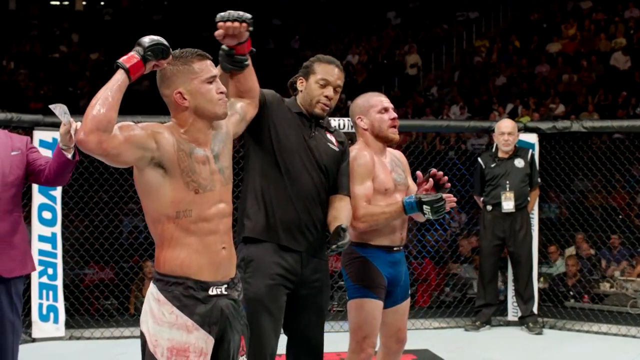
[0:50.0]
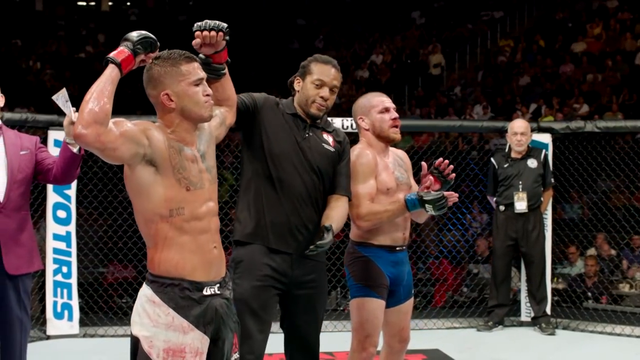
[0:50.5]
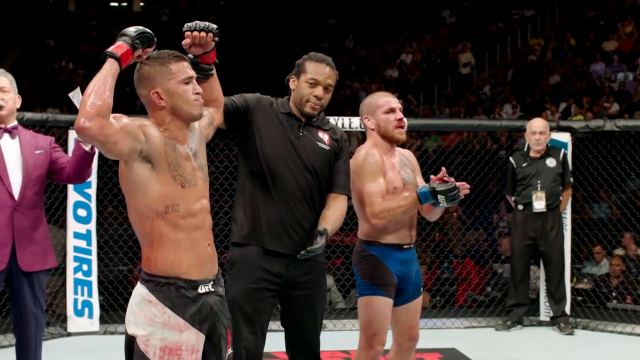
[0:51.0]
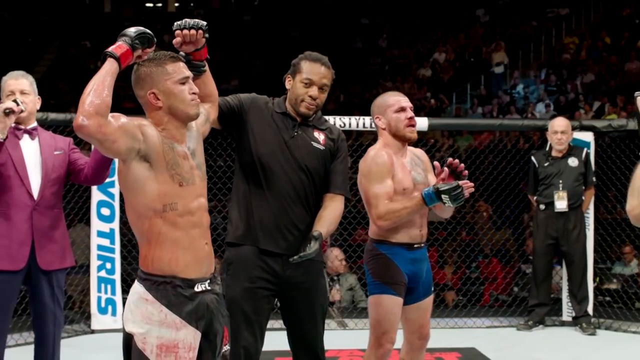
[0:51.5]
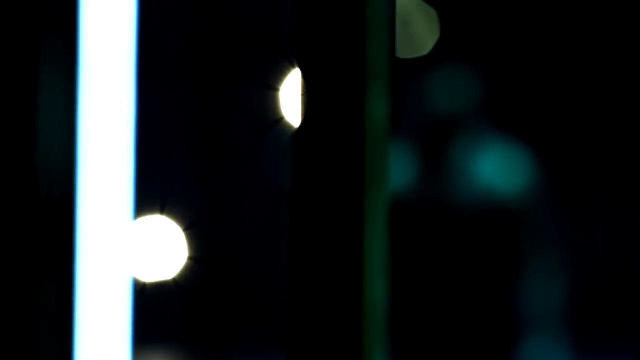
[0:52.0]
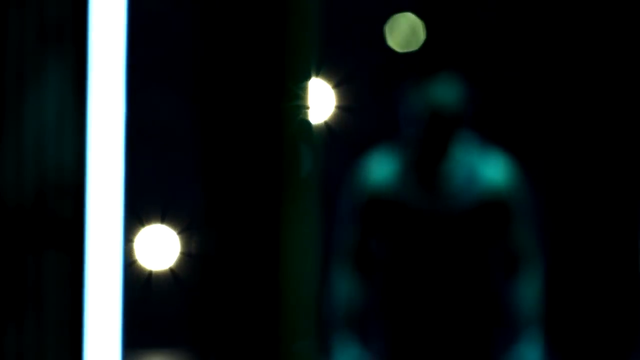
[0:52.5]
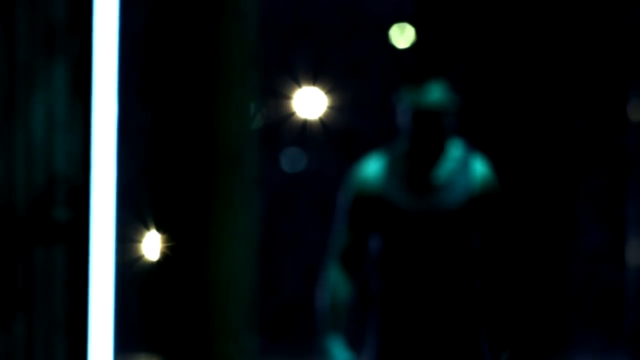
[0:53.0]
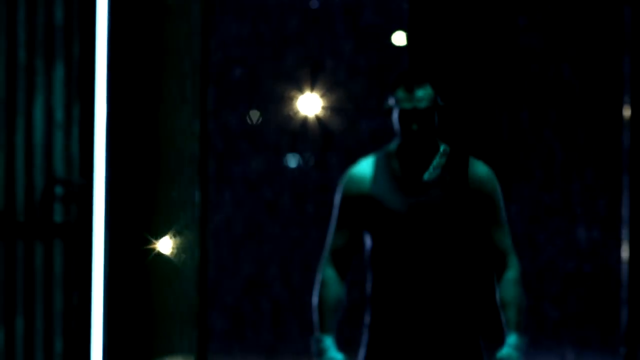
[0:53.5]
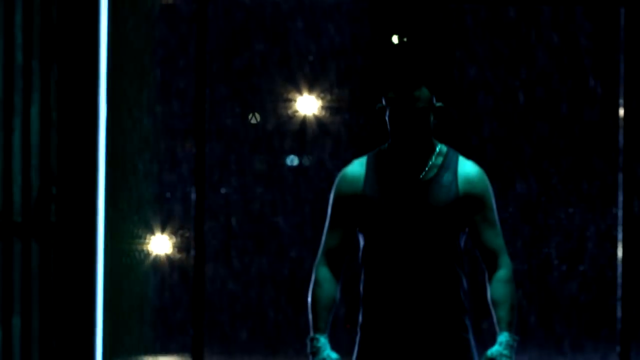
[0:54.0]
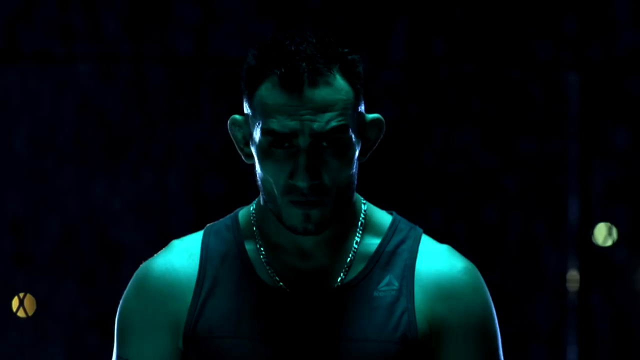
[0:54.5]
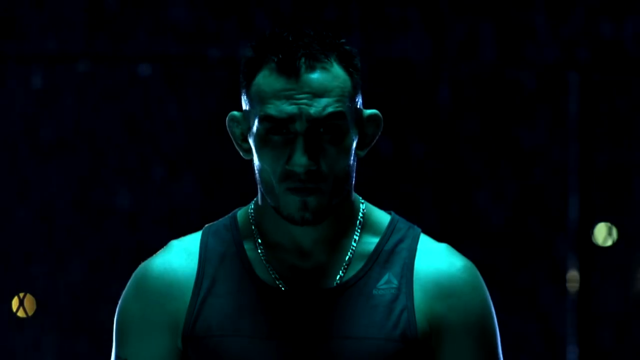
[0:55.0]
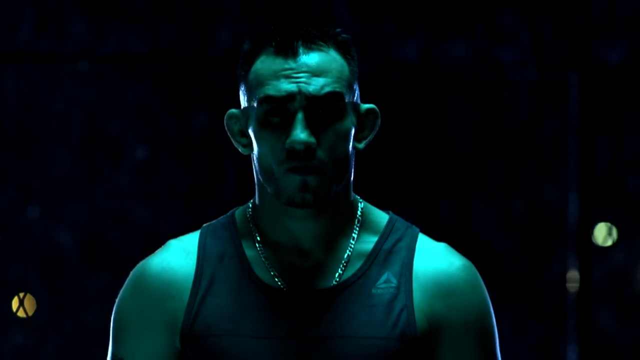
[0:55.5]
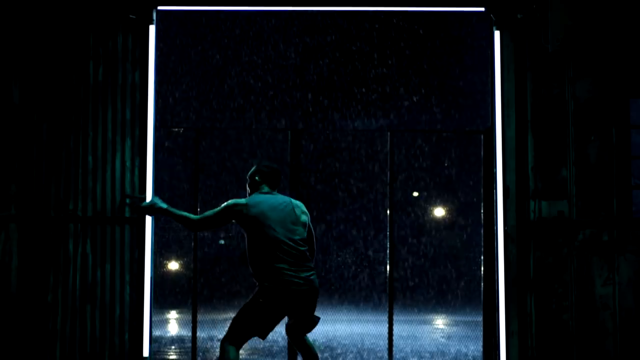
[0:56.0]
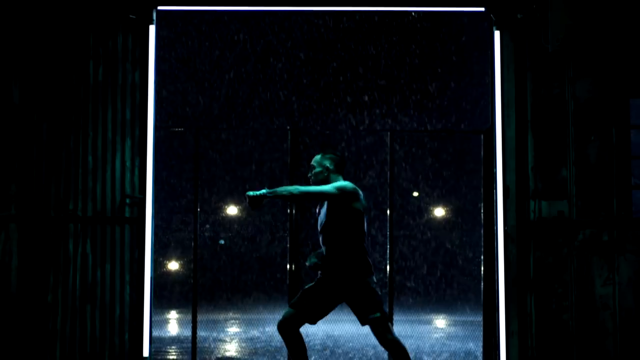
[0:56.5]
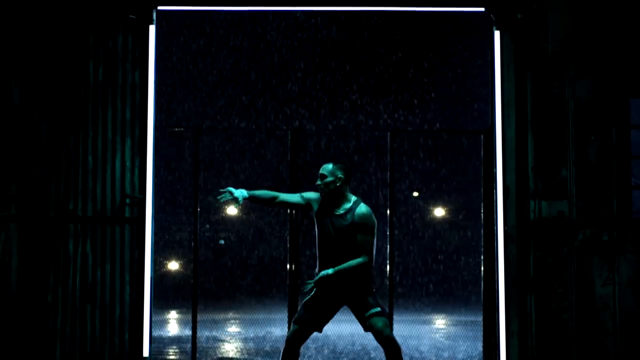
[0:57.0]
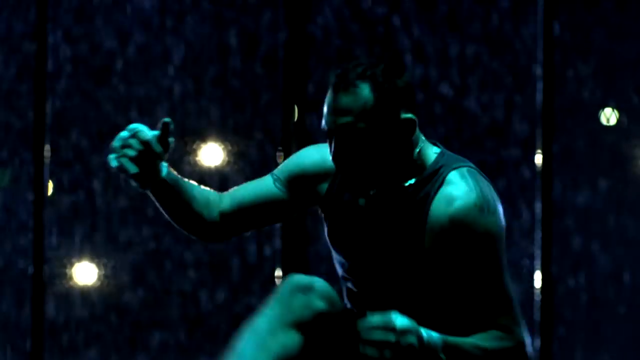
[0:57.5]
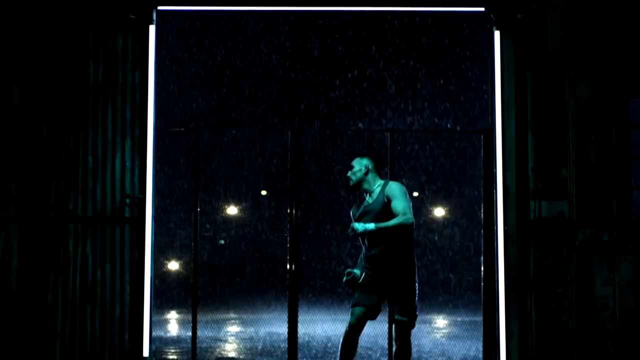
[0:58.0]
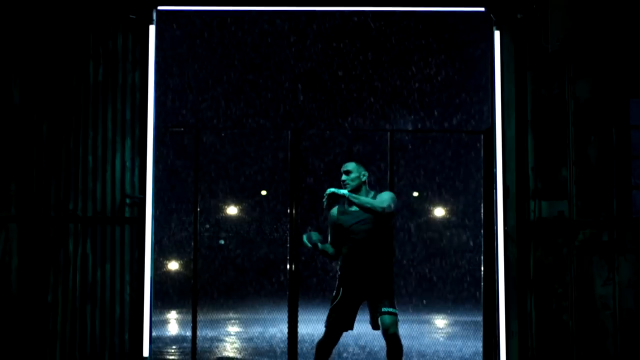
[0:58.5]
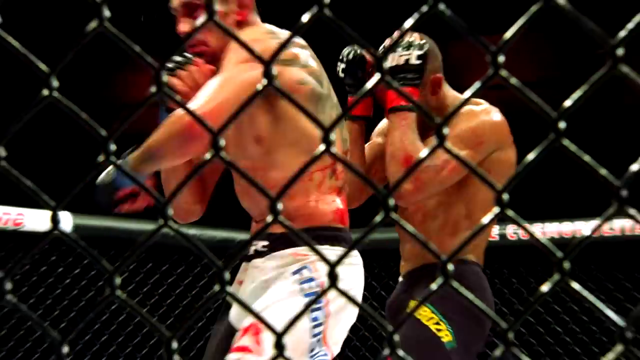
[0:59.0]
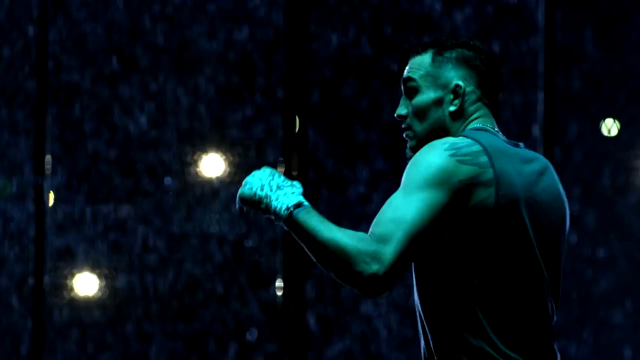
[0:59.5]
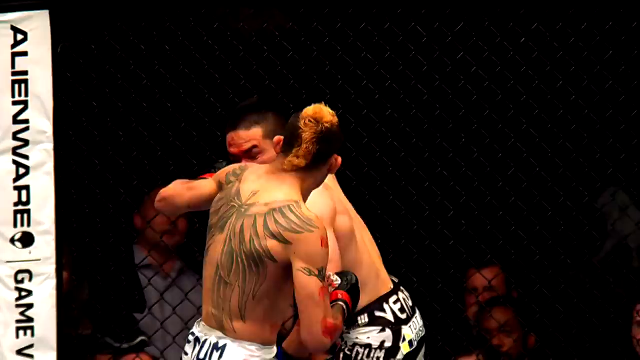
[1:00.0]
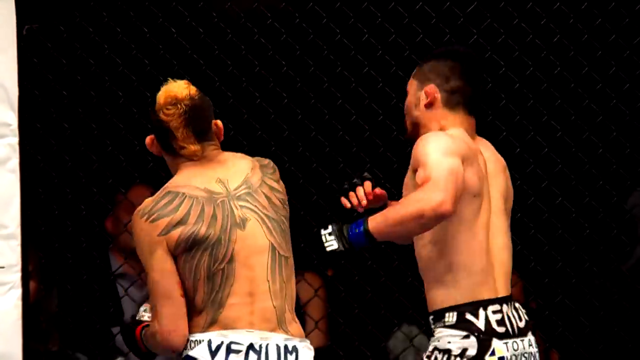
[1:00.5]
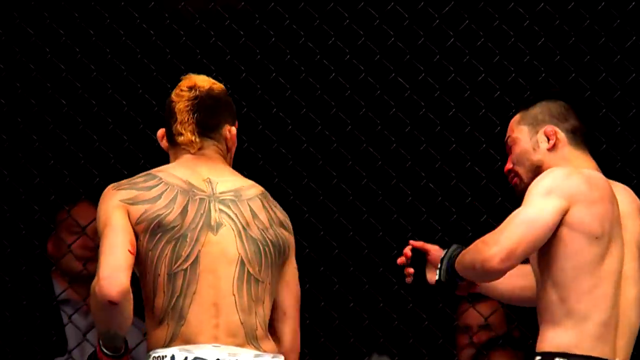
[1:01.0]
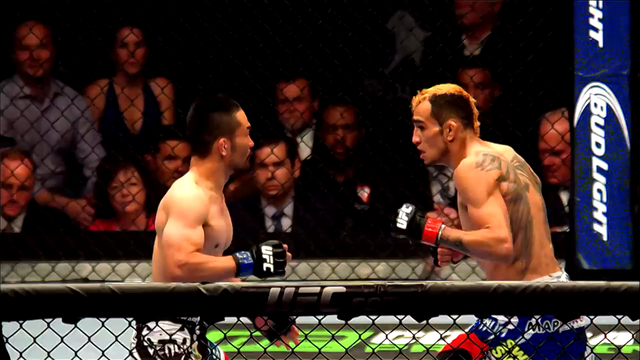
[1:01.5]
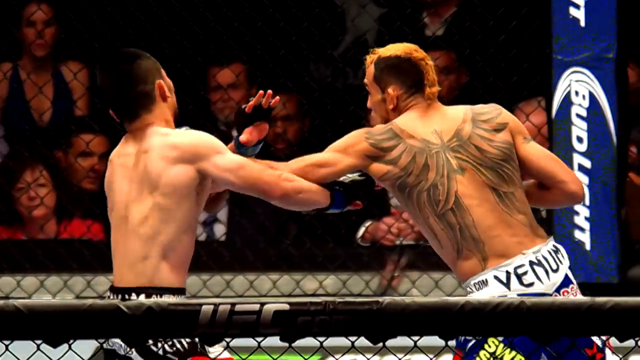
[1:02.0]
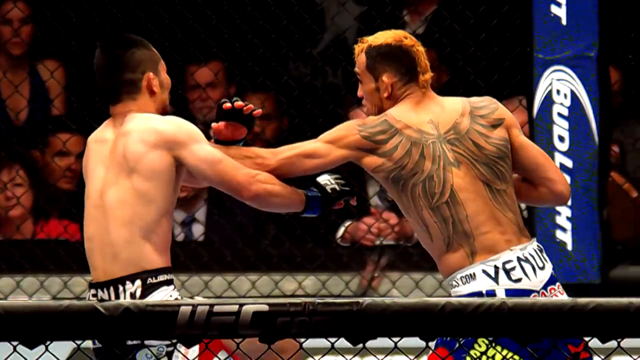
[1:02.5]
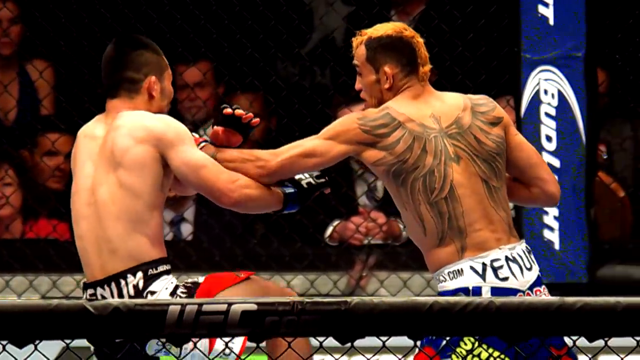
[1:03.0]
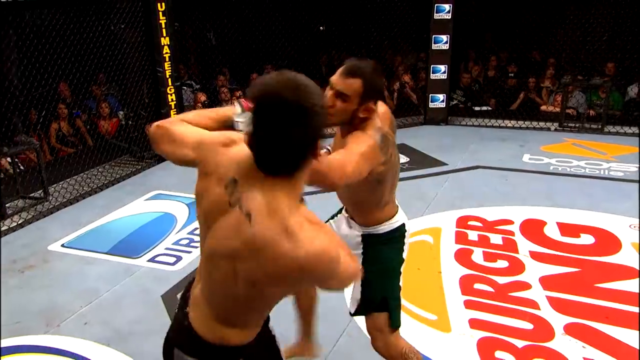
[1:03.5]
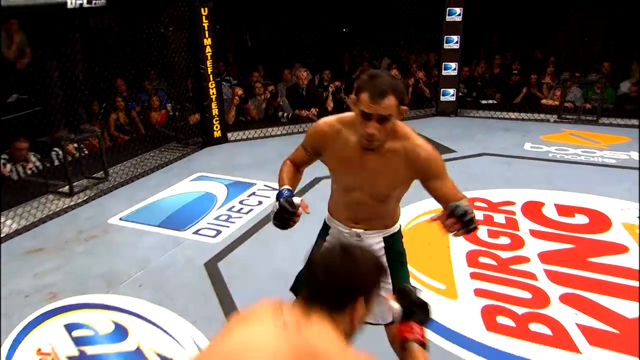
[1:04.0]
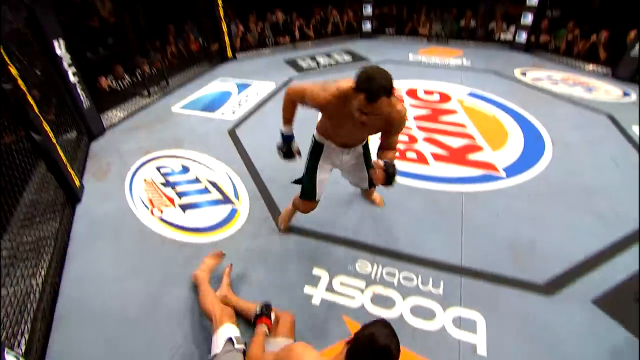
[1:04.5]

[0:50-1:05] The Arab UFC fighter stands shirtless in the middle of a fighting ring while a referee holds his arm up and he raises his other arm as the winner. He is drenched in sweat, his armpit hair is visible, and he has black hair; his name is apparently Khabib. The video then shows other UFC fighters punching each other and running around a ring. Next comes a zoom in on another Arab-looking fighter punching the air in the shadows in a promotional shot; he wears a silver chain, faces the camera, looks down and then back up. It is a promotional video for a fight between Conor McGregor and Khabib, with a highlight reel of the fighter's bouts in which he runs around, bounces off the walls, punches and kicks people, and is covered in sweat.